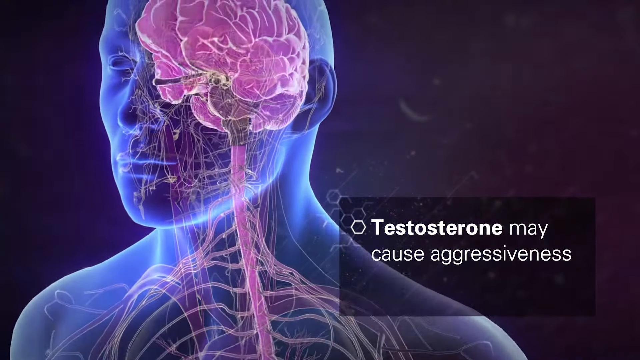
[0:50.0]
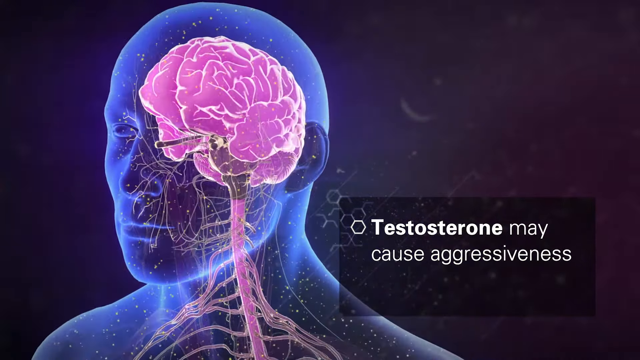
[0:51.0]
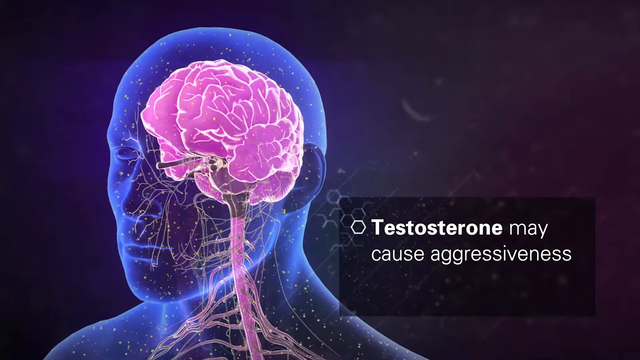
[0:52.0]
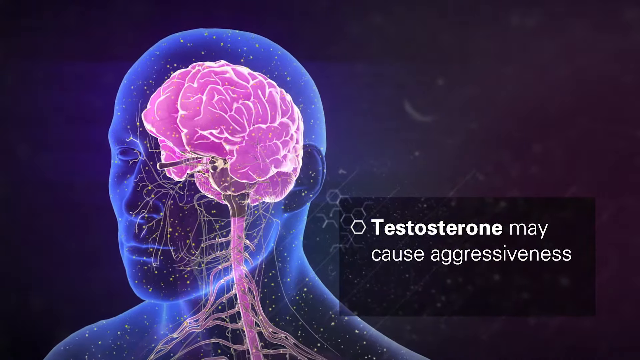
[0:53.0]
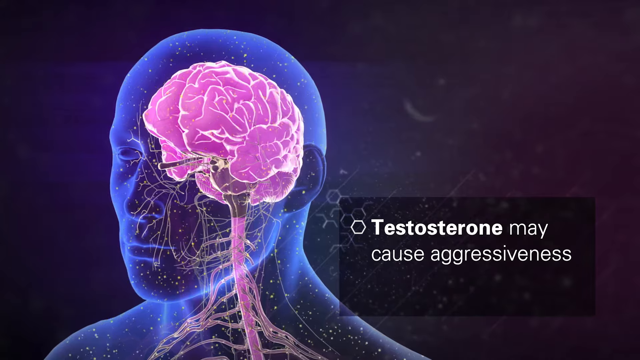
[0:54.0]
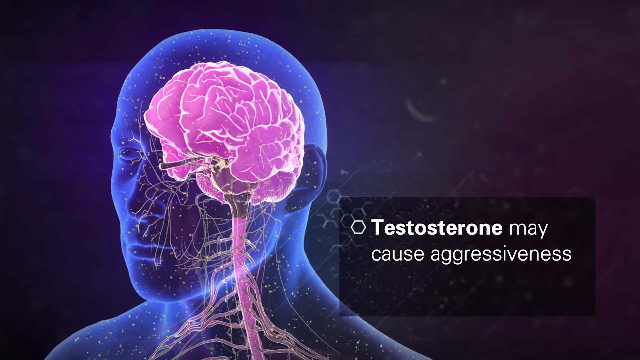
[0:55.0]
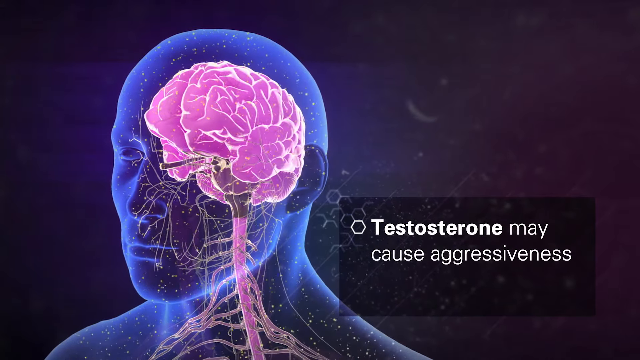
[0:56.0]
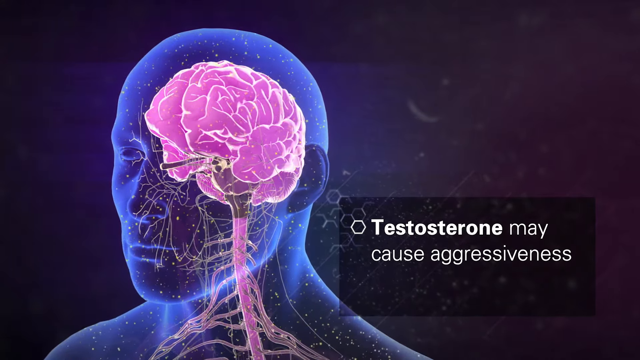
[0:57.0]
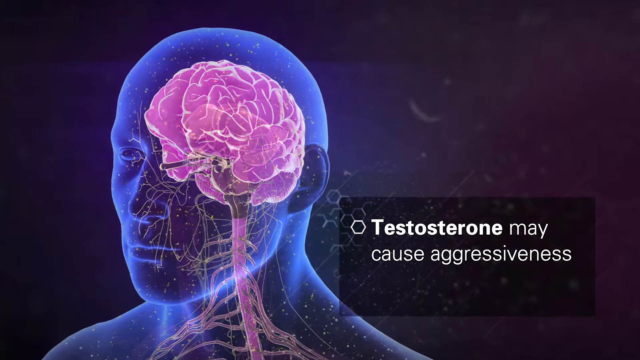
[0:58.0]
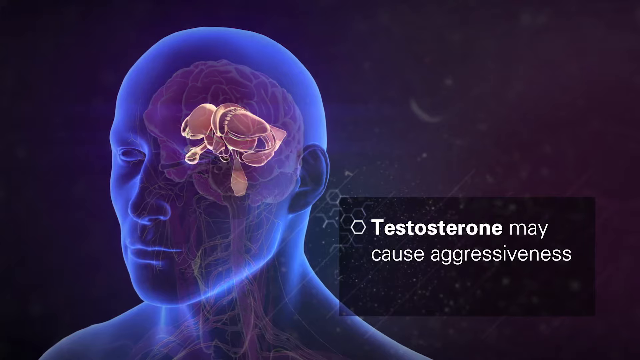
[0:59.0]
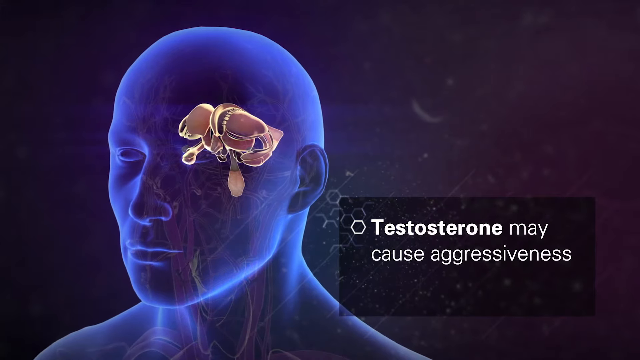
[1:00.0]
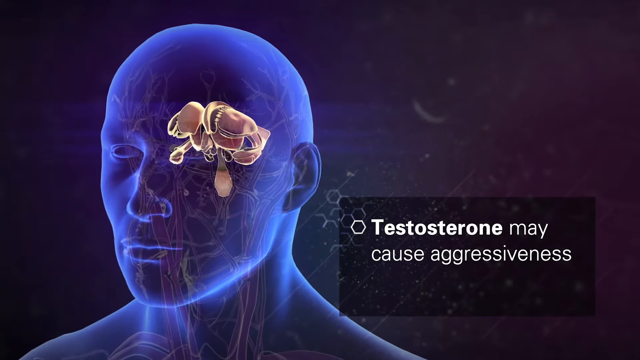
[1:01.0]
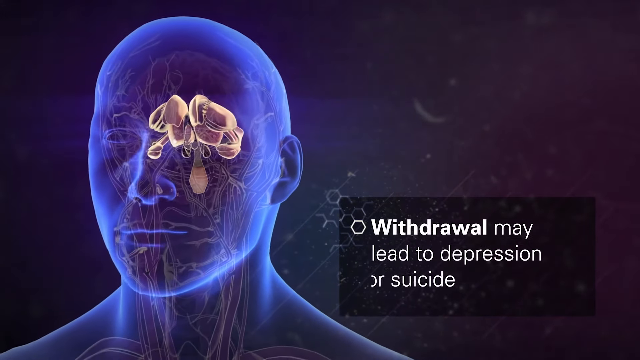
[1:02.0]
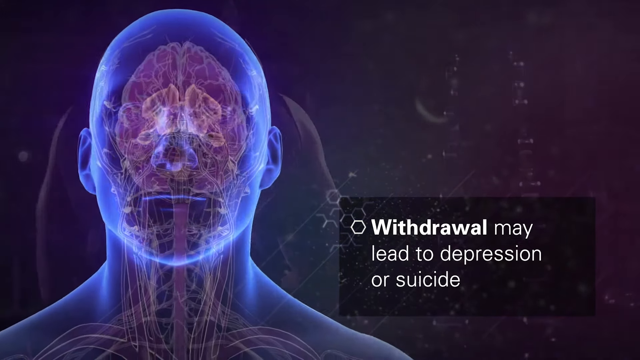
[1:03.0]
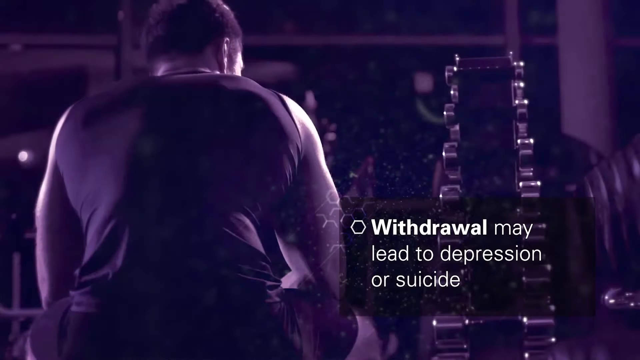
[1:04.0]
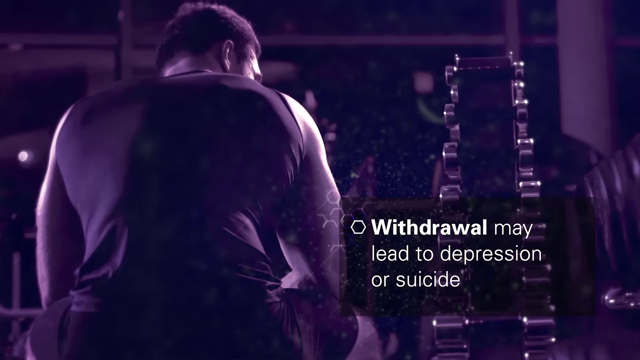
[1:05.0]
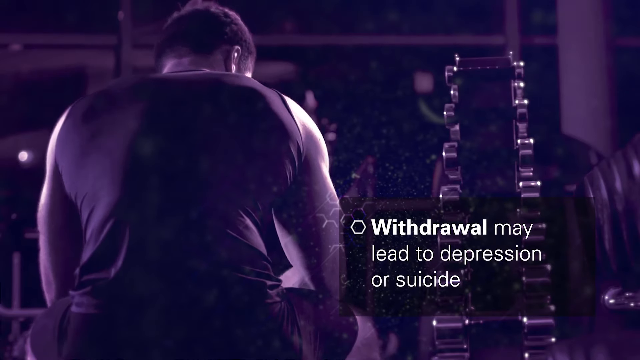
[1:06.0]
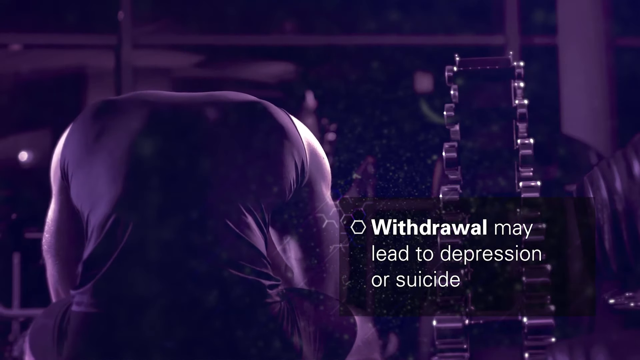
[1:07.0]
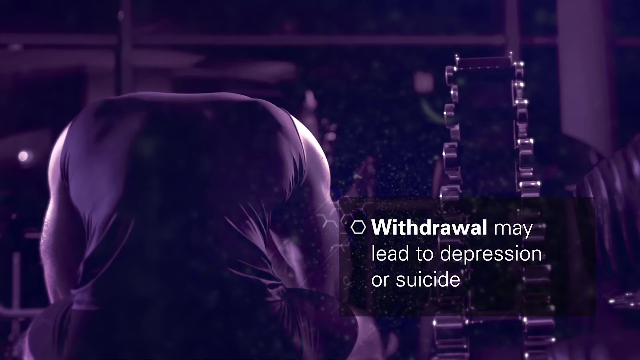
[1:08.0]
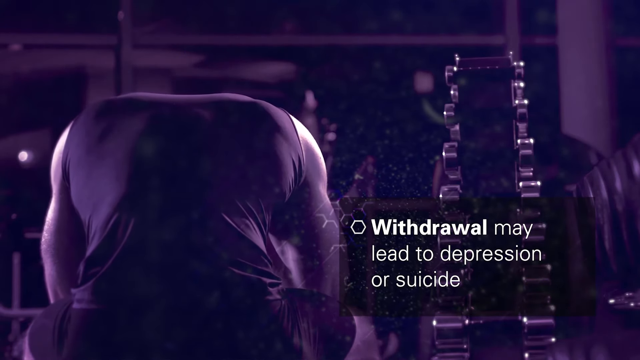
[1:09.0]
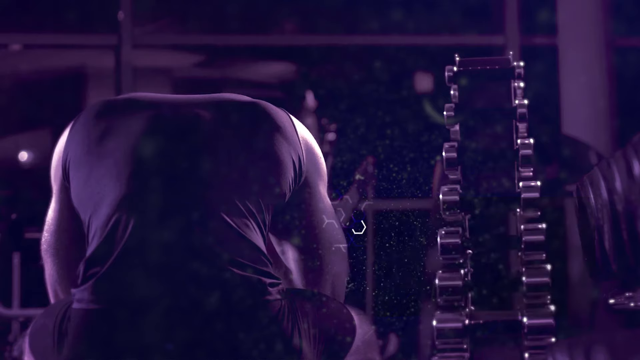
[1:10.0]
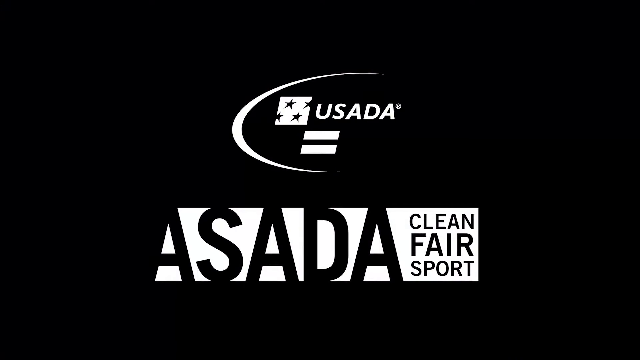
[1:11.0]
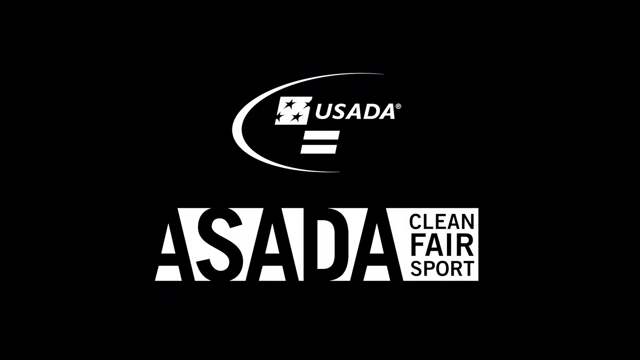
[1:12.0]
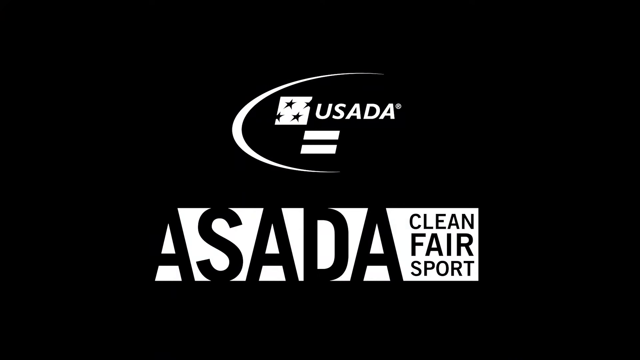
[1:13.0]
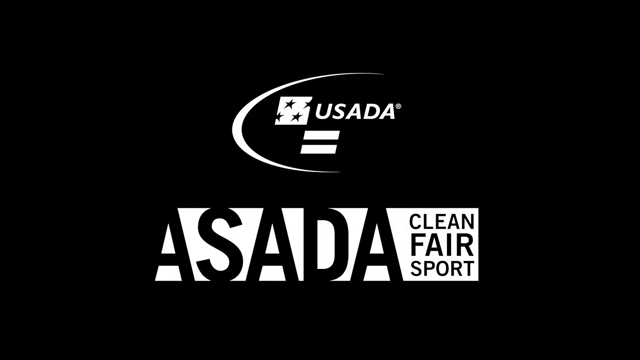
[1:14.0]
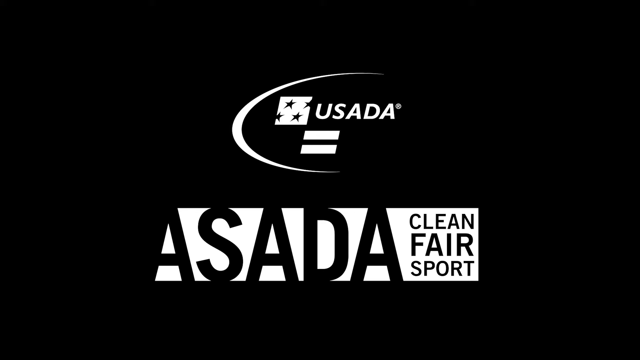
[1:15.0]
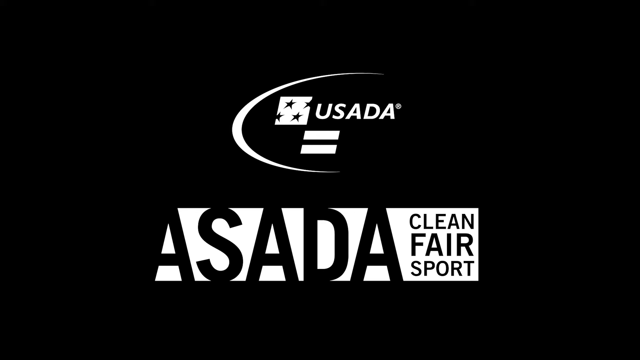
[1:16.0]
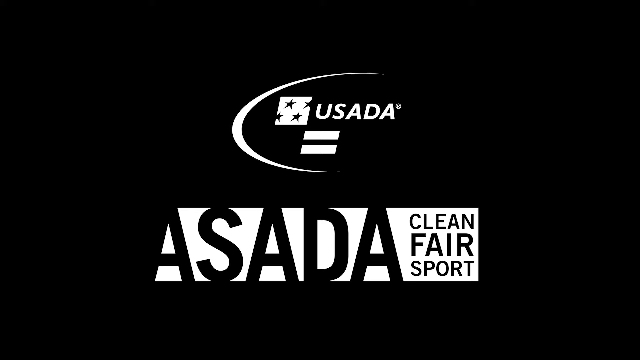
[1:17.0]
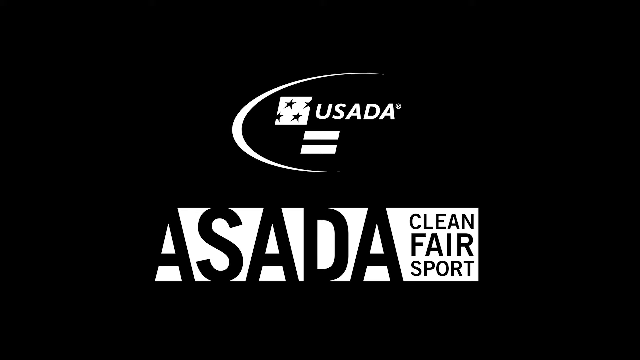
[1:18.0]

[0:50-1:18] Against the dark background, the blue person's head is on the left side, with the brain shown in a pinkish color. In the lower right corner, white lettering says "testosterone may cause aggressiveness." The slide with the brain continues to show, then the head turns around and the video shows that withdrawal could lead to depression or suicide. A man is sitting up on top of a high building, leaning over and looking very sad. The last shot is a black screen with white print showing "USADA" and the words "the Clean and Fair Support."